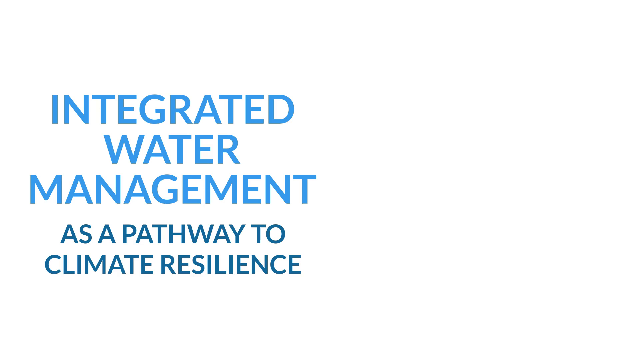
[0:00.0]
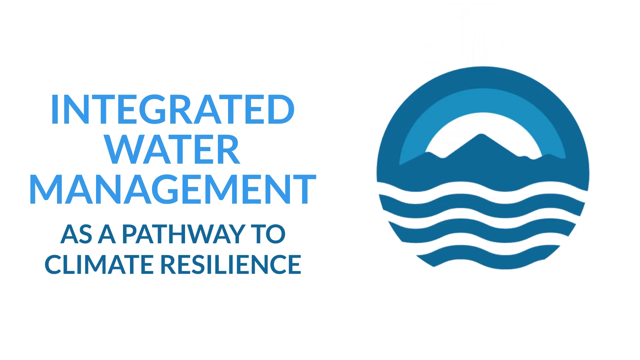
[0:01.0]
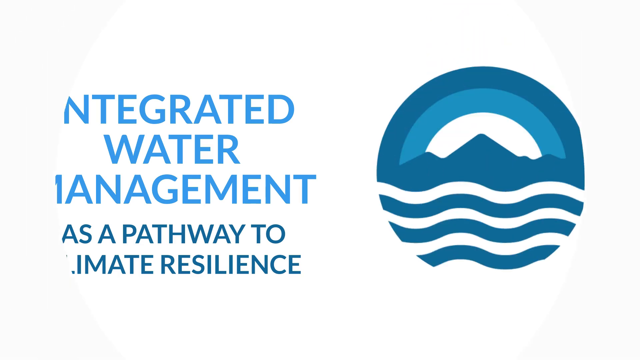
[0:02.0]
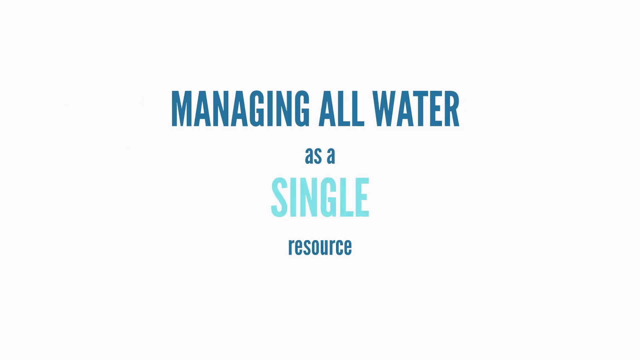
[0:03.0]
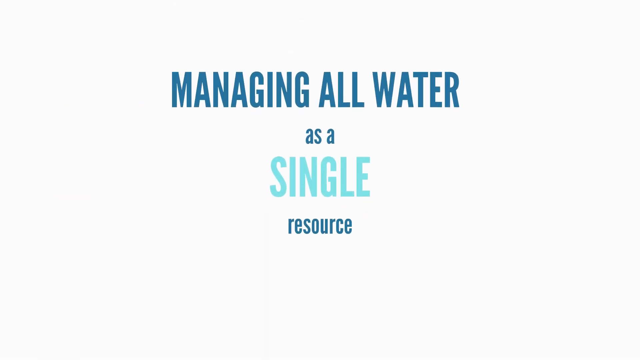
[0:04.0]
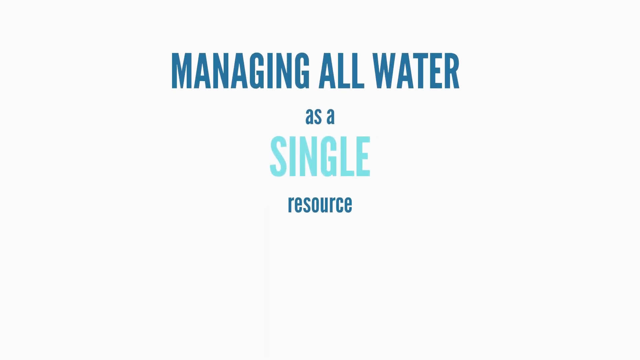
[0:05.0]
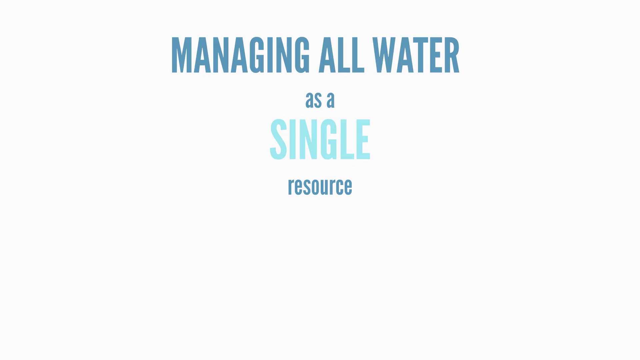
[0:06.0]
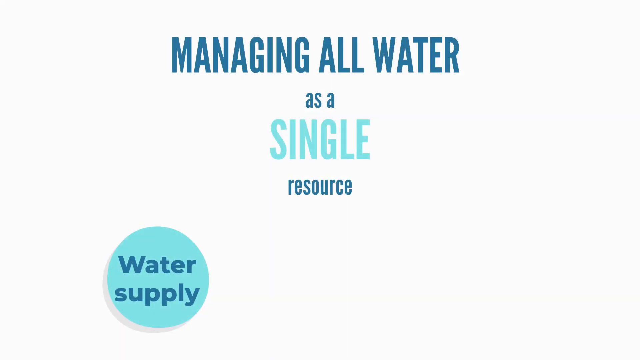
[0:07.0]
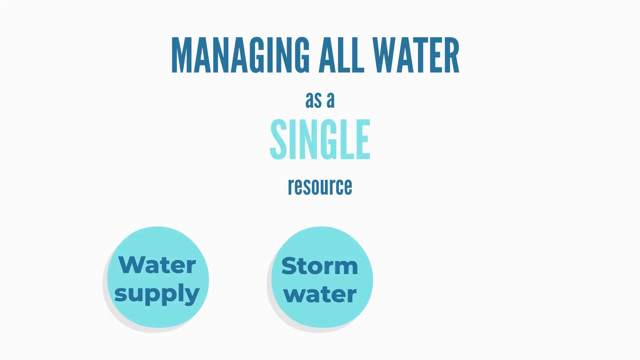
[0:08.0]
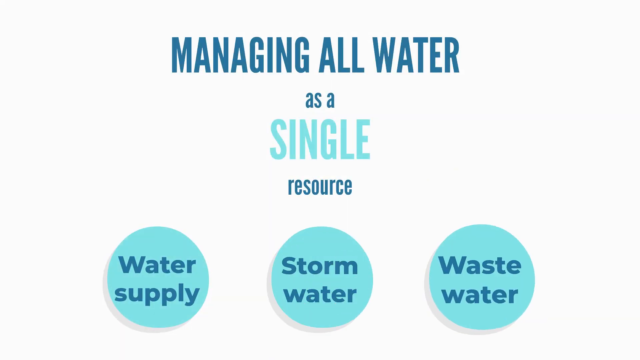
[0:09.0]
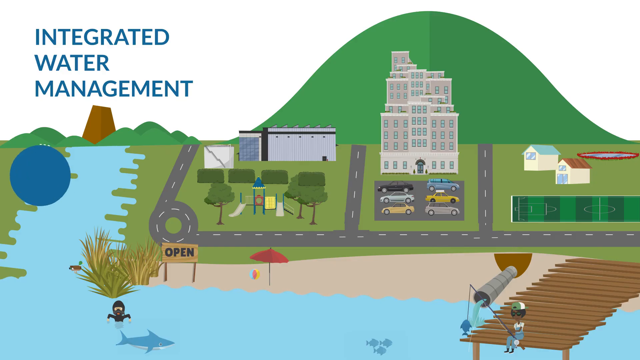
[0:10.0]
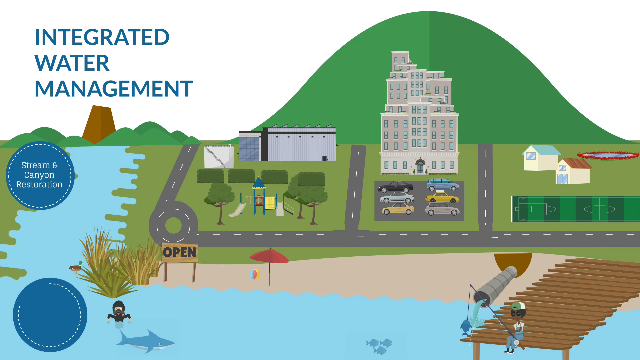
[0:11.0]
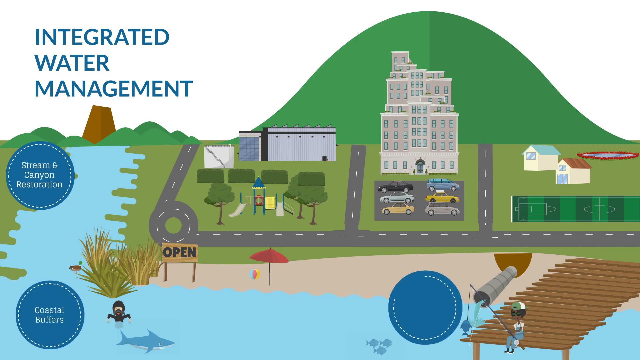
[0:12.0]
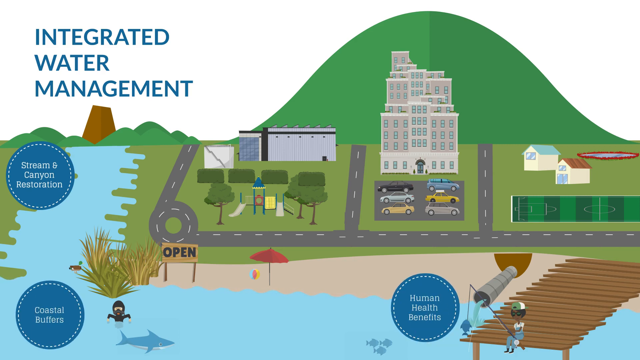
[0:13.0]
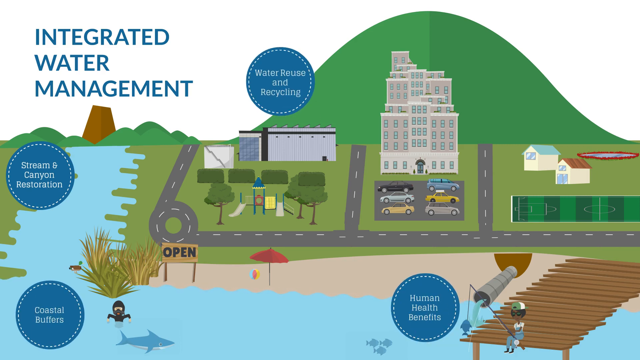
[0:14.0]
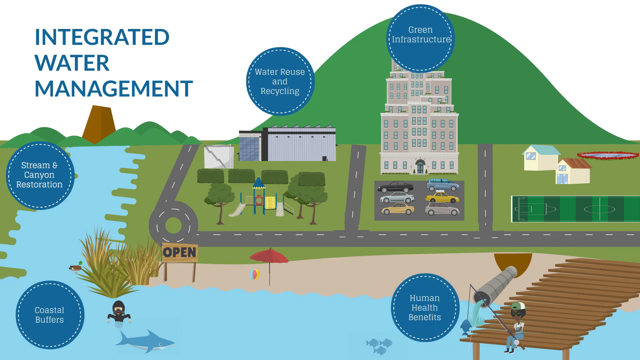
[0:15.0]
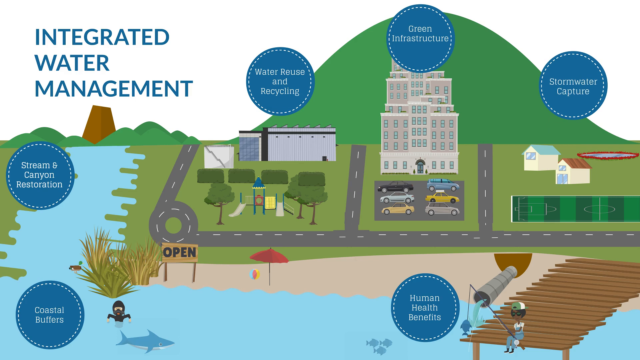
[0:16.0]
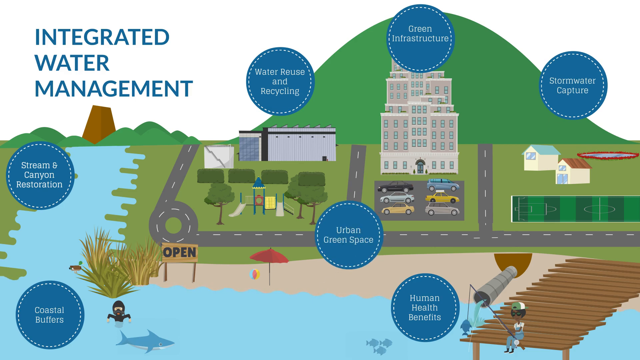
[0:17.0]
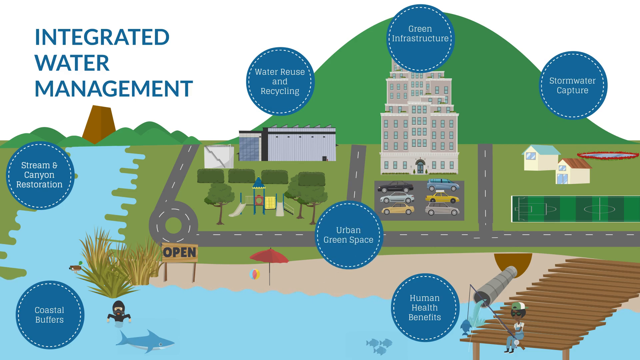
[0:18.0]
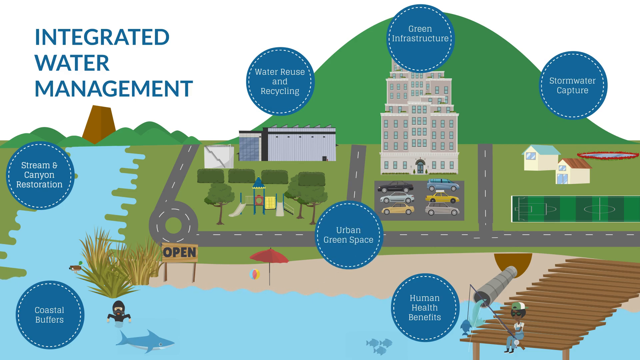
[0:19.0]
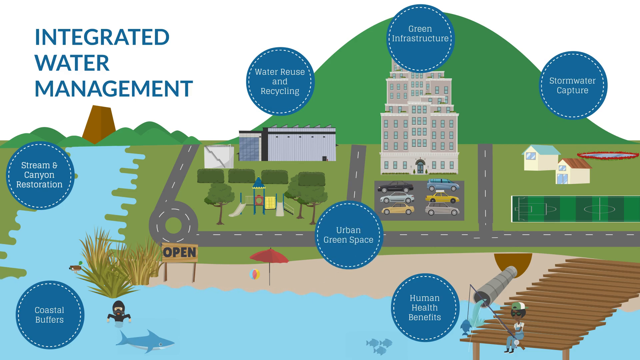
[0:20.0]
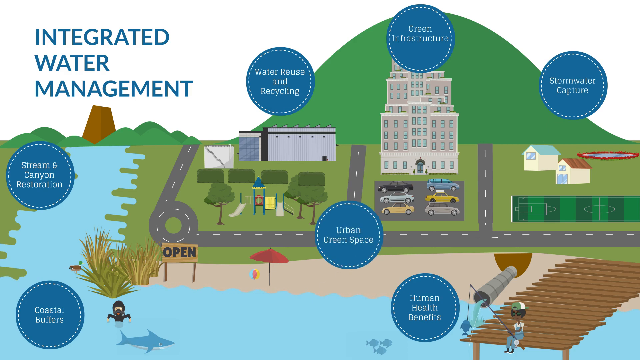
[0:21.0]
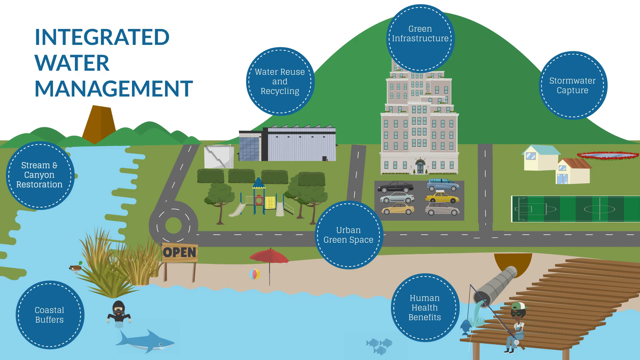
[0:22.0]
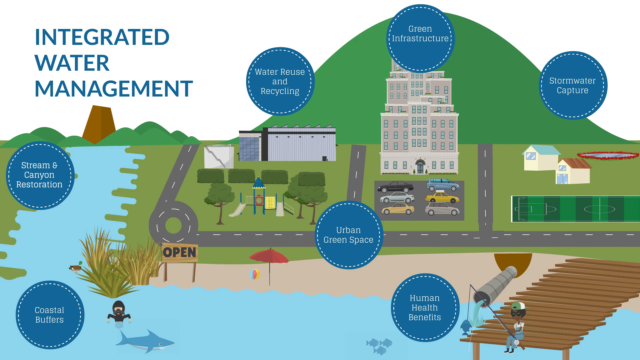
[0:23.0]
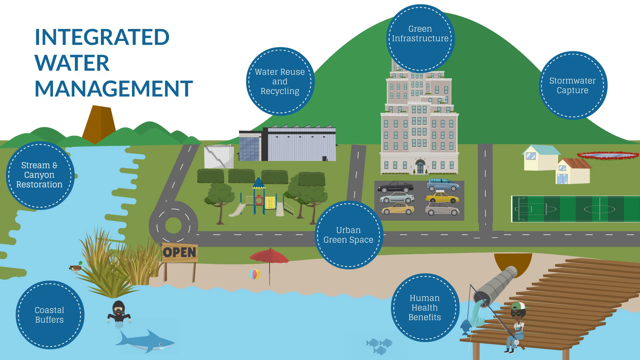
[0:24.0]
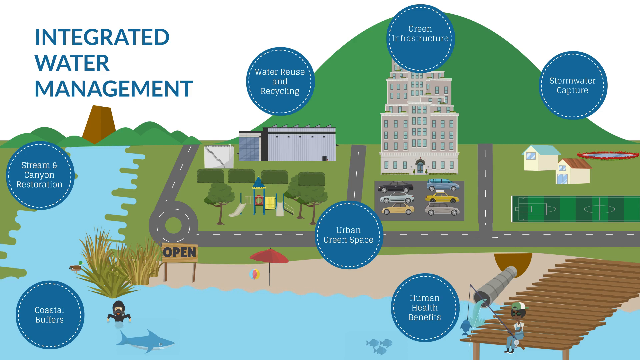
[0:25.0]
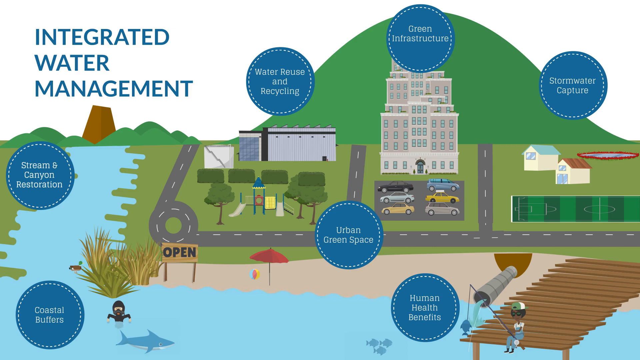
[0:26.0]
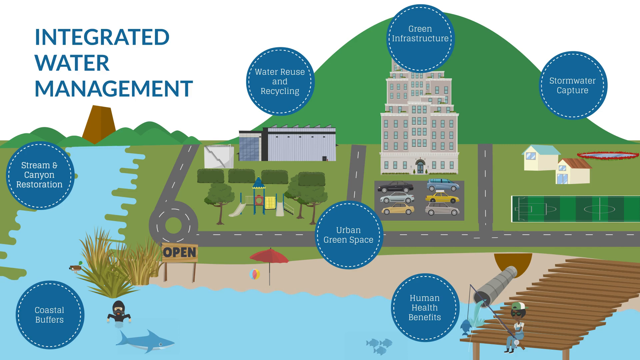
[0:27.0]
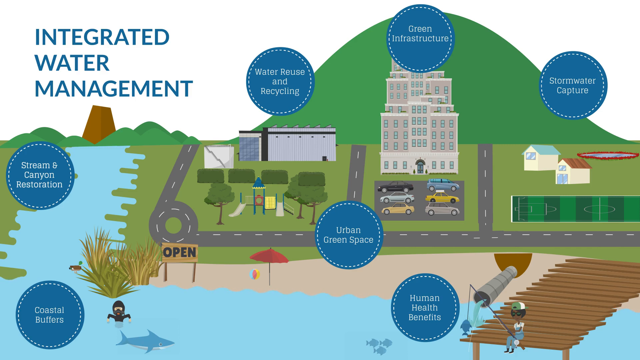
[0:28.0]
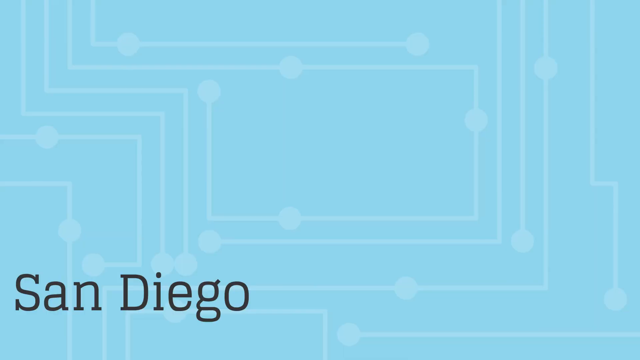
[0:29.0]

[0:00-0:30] The title "Integrated Water Management As A Pathway to Climate Resilience" appears, along with "Managing all water as a single resource" and "water supply, stormwater, and wastewater." The scene opens on a small city with houses, a city hall and a parking lot. What looks like a woman is fishing on the side of an embankment or a little pier. There is a small beach, and a hill in the back with some trees. Quite a few blue pop-ups appear in the back, each with a little writing about its purpose: "Stream and Canyon Restoration," "Coastal Barriers," "Human Health Benefits," "Urban Green Space," "Water Reuse and Recycling," "Green Infrastructure" and "Stormwater Capture." Then the text "San Diego" and "Sustainable, Secure, and Climate Resilient future" appears.